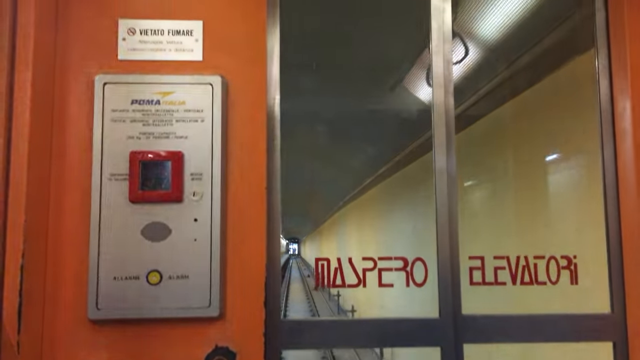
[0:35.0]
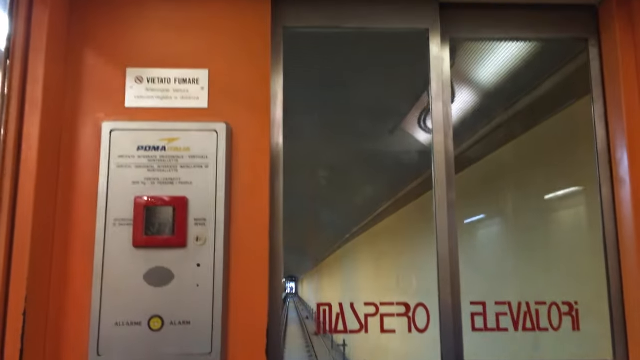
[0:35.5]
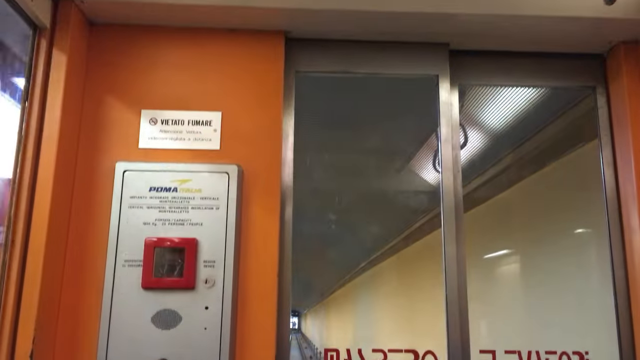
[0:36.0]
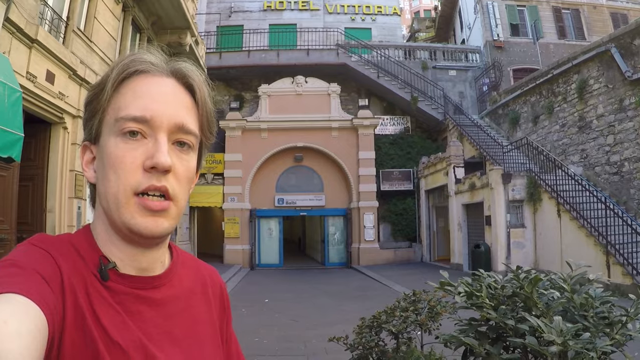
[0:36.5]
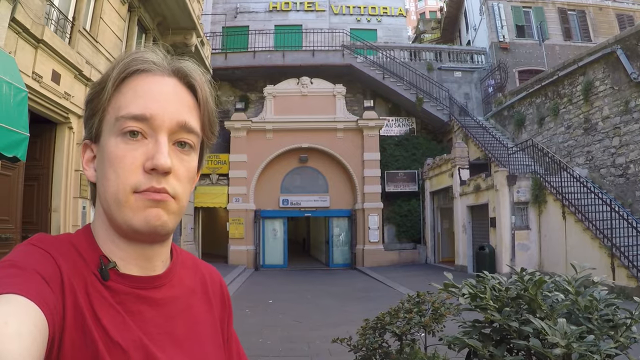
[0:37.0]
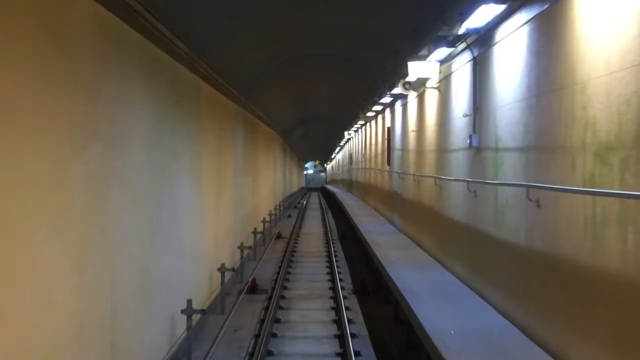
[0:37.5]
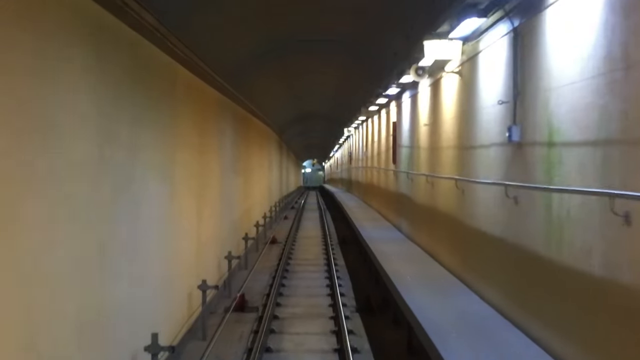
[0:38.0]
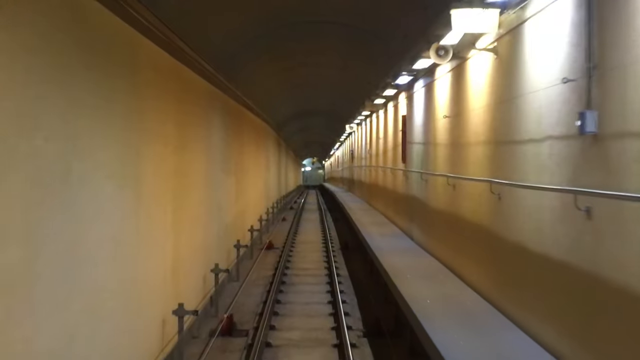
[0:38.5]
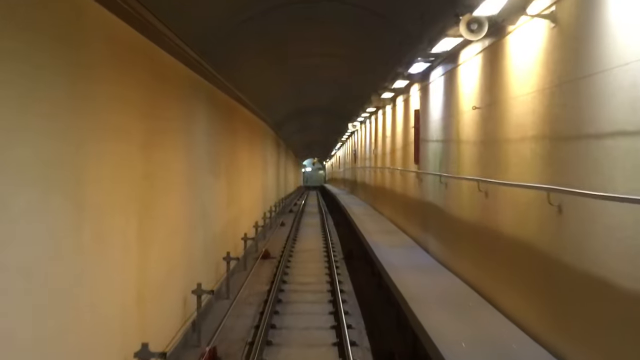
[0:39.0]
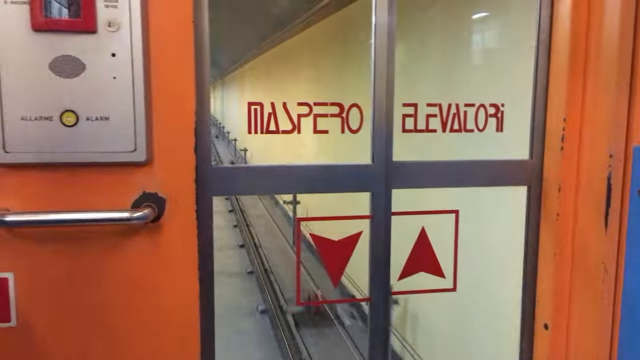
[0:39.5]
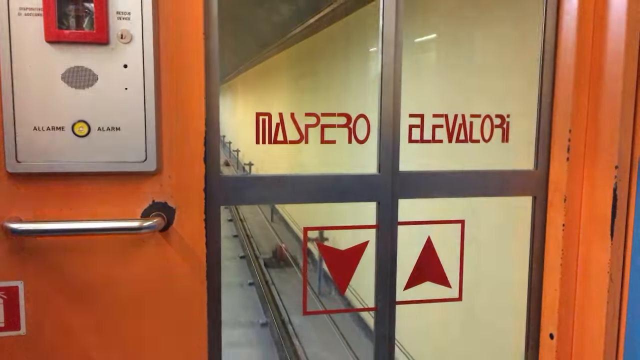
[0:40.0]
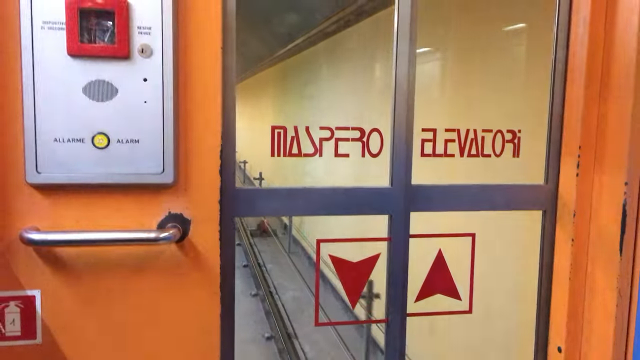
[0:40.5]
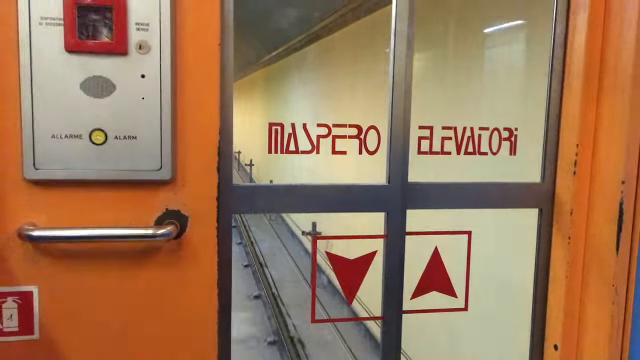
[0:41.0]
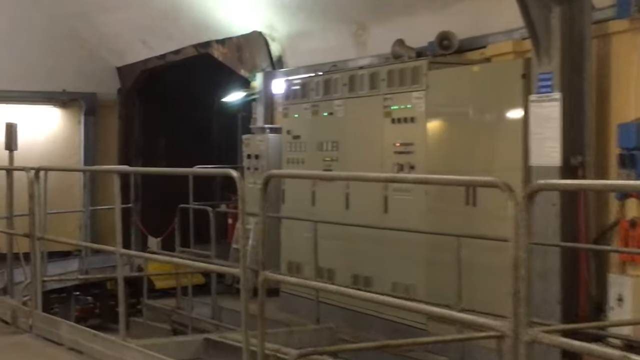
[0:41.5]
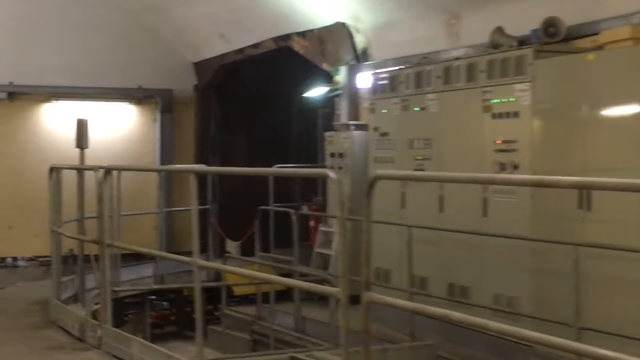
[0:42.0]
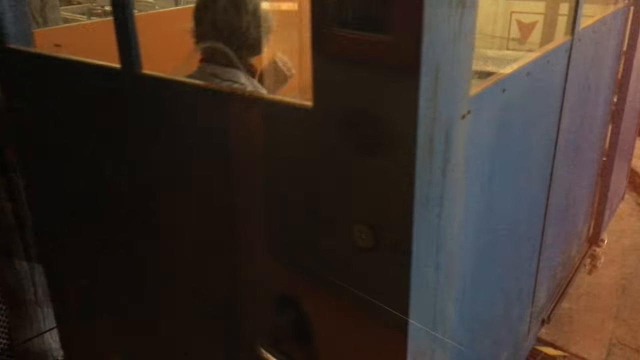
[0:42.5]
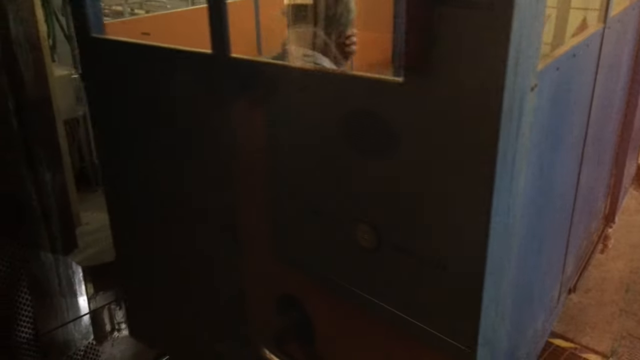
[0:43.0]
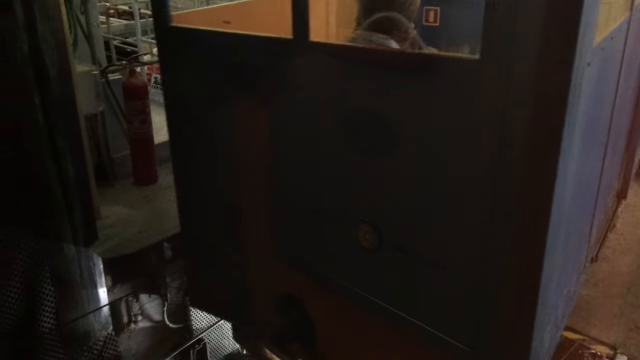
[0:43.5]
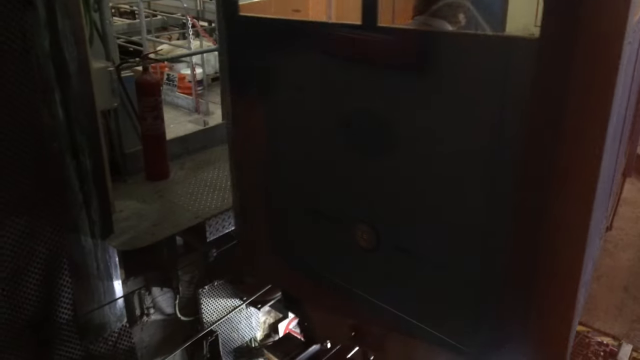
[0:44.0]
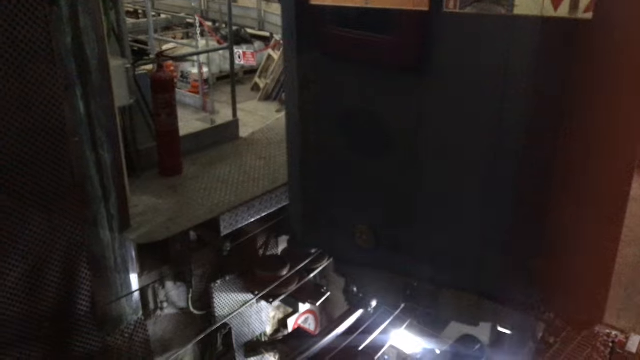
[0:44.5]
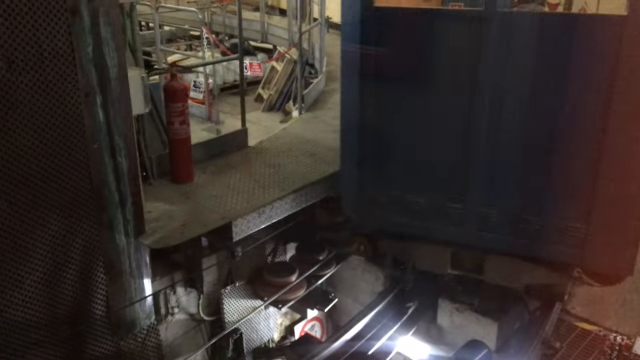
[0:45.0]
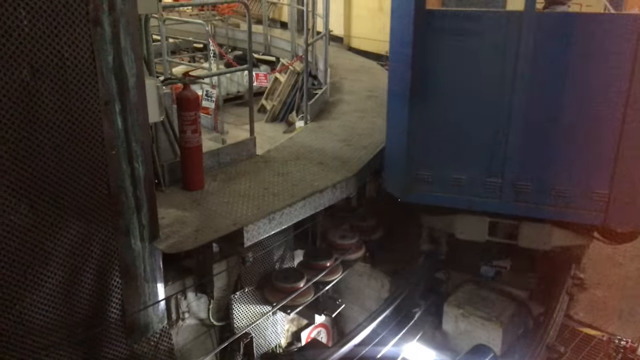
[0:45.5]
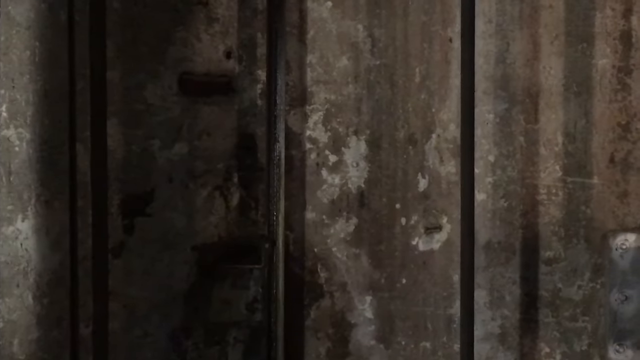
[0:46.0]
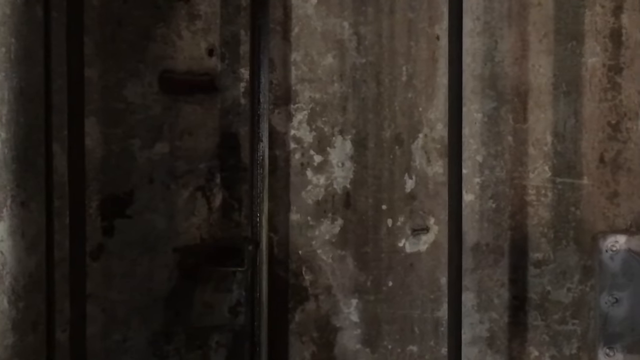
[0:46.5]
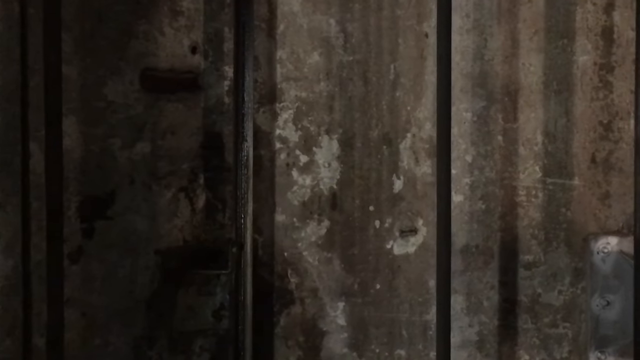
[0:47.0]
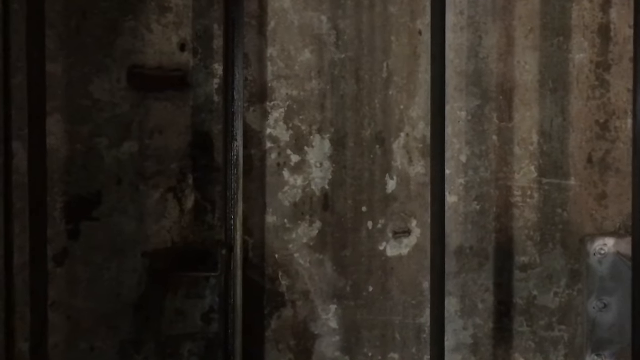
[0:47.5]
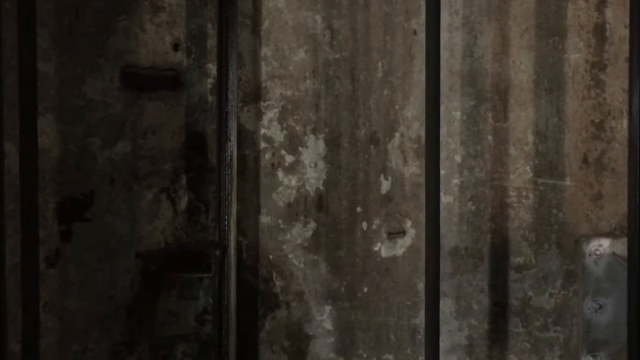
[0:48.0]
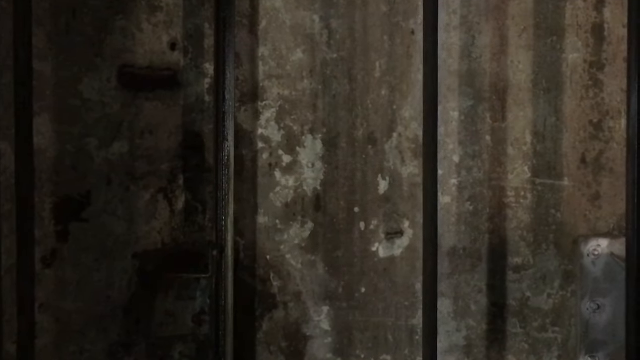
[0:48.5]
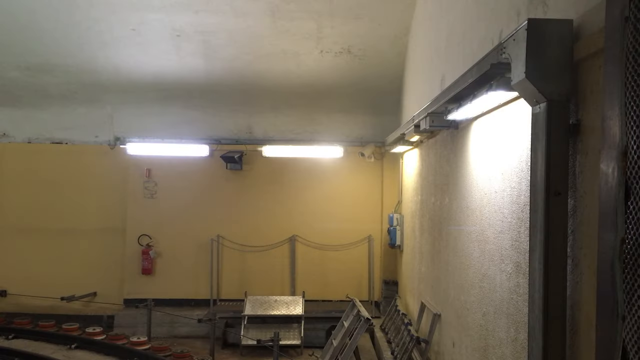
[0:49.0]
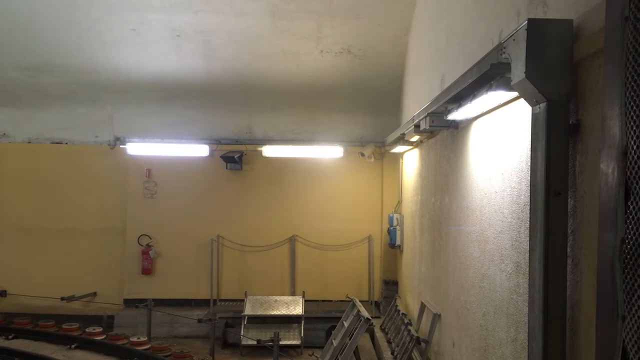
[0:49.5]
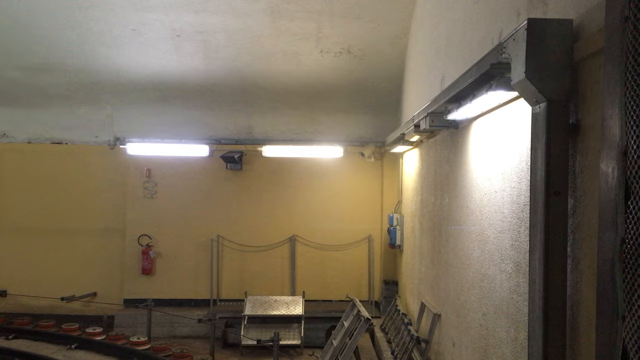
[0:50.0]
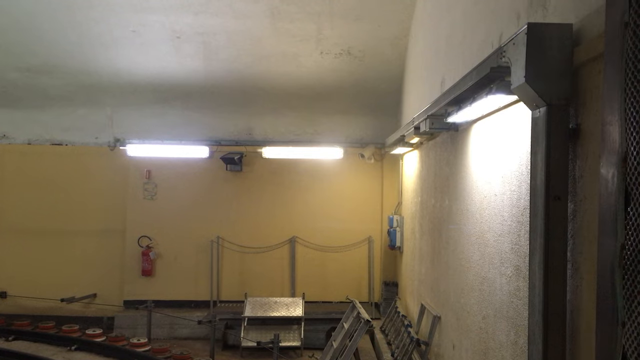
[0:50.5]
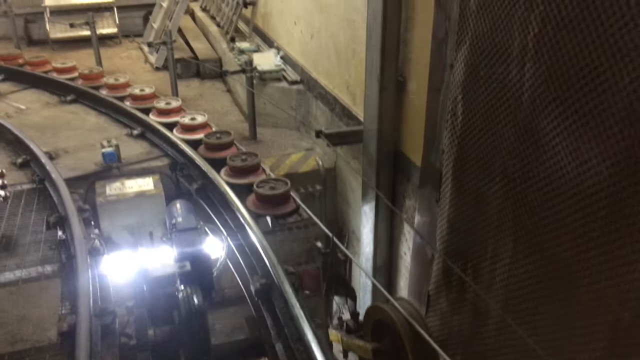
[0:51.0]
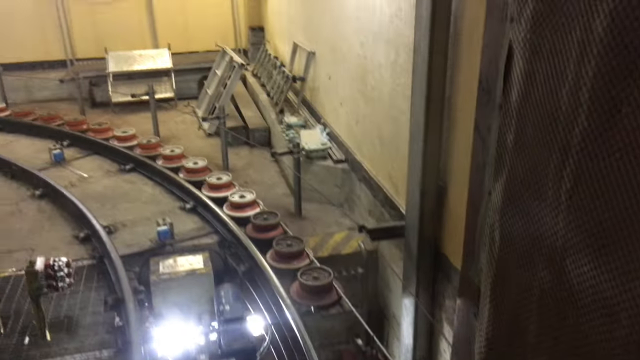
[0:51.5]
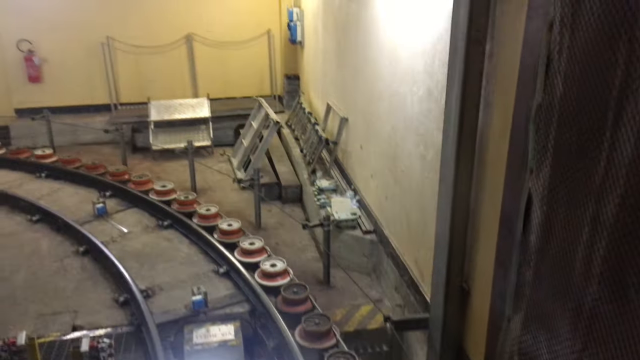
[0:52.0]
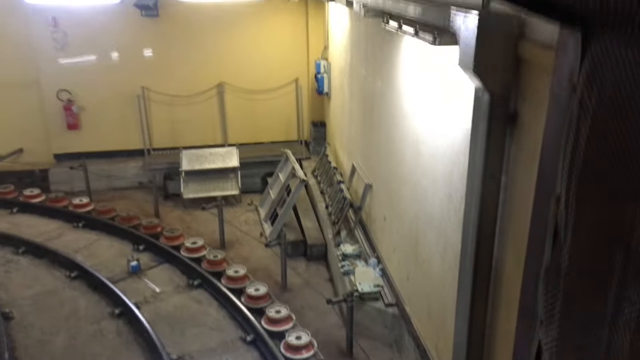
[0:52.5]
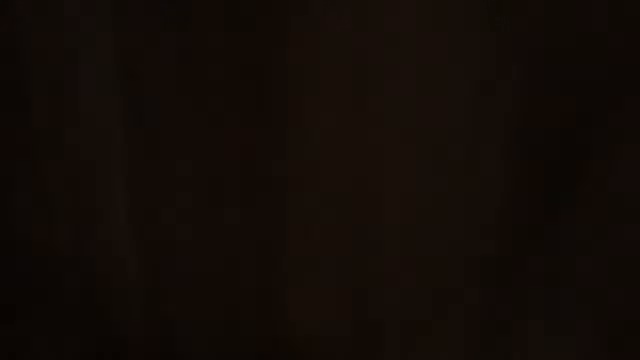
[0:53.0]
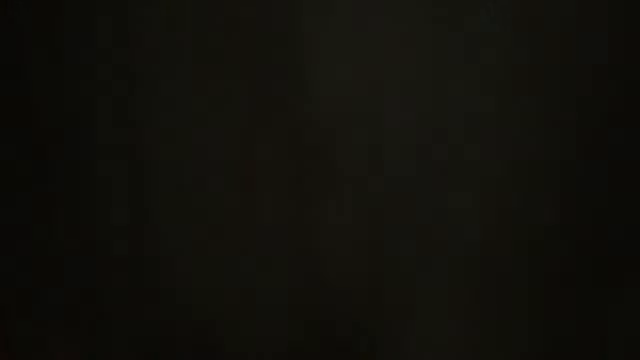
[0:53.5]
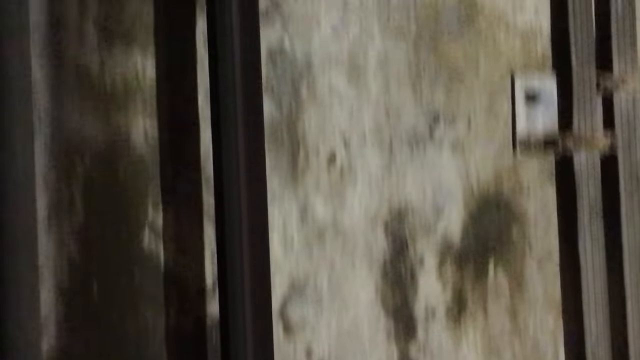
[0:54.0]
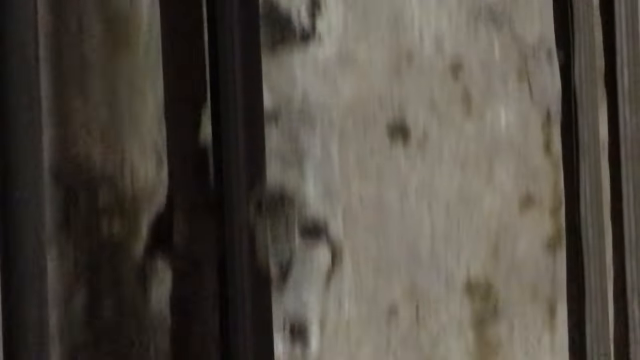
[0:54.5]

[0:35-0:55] The view is inside the elevator, which seems to be going straight along a track inside the Balbi building. The interior of the elevator is orange and the exterior of the box is blue, and it has windows. It moves straight forward into what looks like a machine control room, rounds a corner, and then stone walls and lights appear before it looks like it starts going upwards. The camera moves vertically up, showing bars on the walls, the tracks below, and the pillars it passes through the windows. There is Italian text in red on the door, which is not readable.